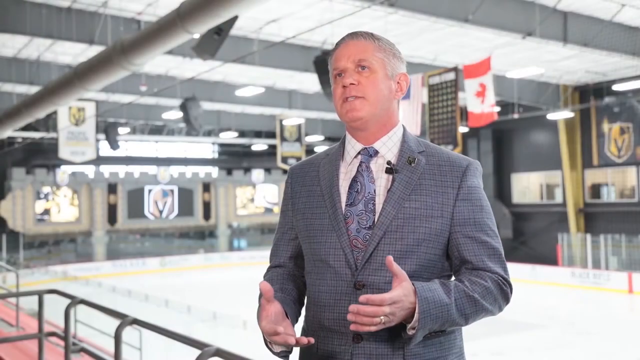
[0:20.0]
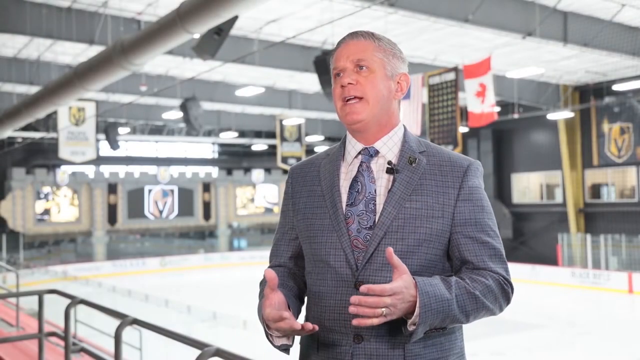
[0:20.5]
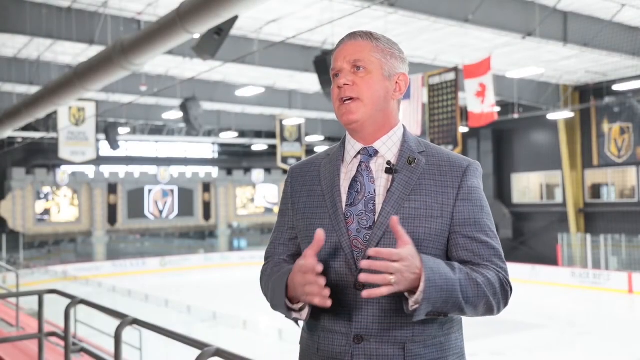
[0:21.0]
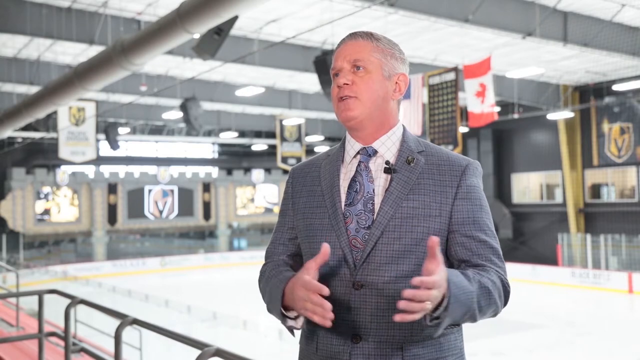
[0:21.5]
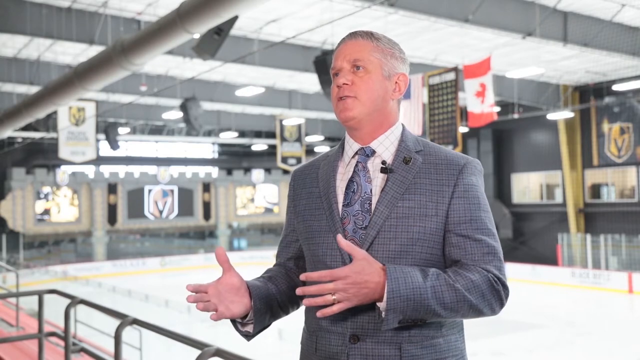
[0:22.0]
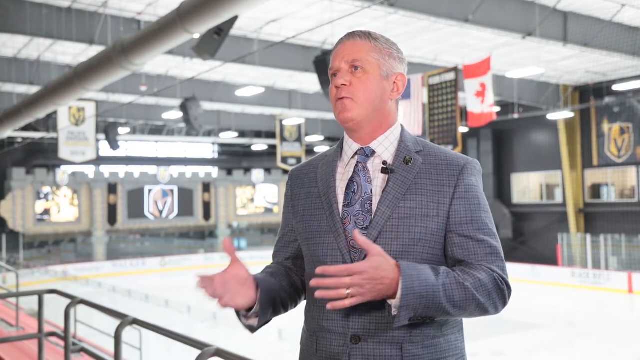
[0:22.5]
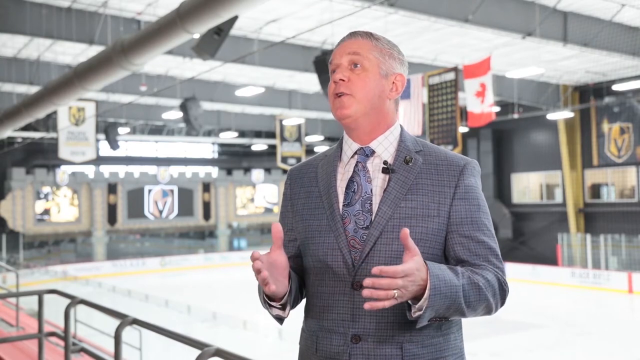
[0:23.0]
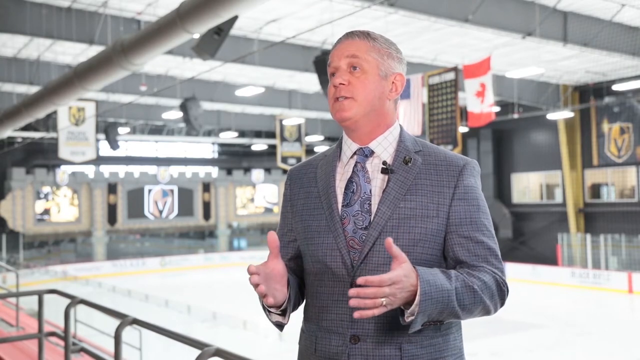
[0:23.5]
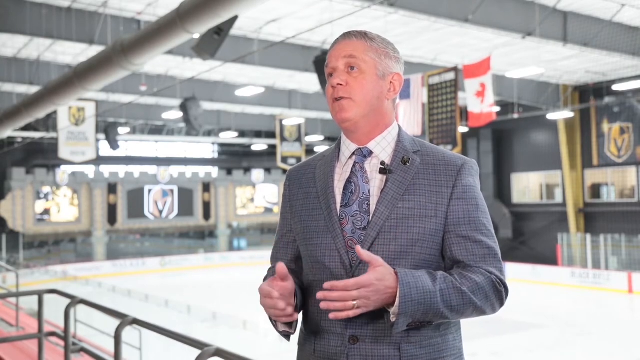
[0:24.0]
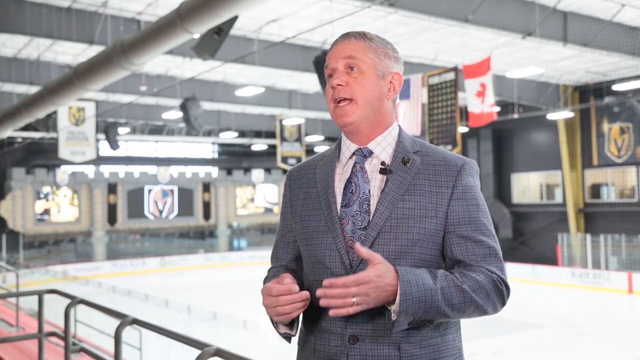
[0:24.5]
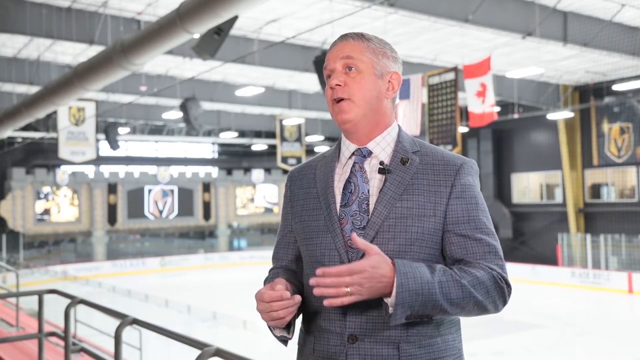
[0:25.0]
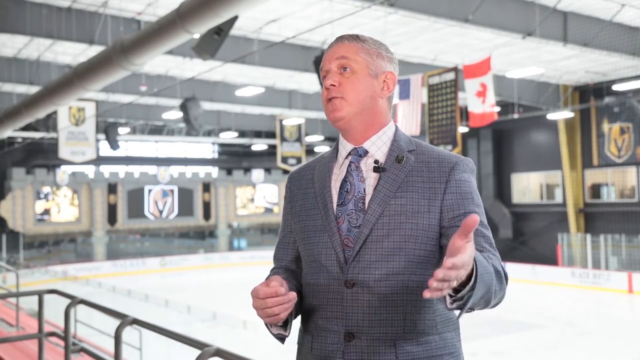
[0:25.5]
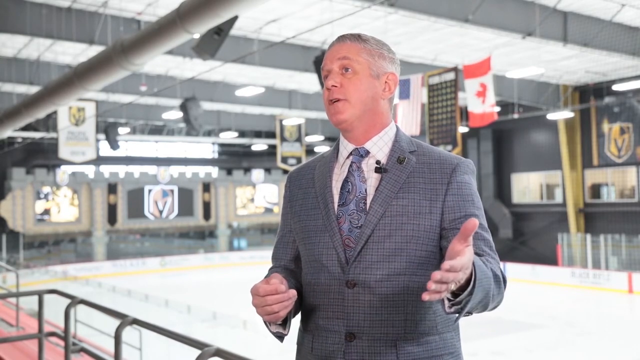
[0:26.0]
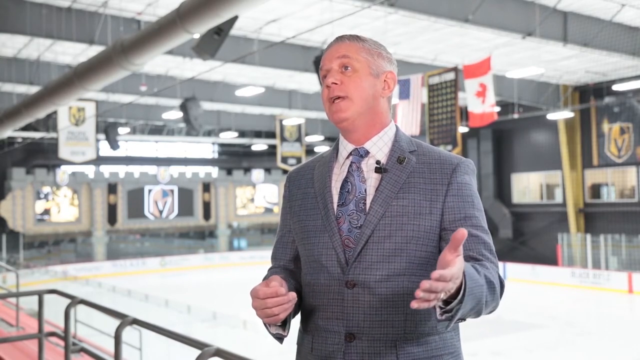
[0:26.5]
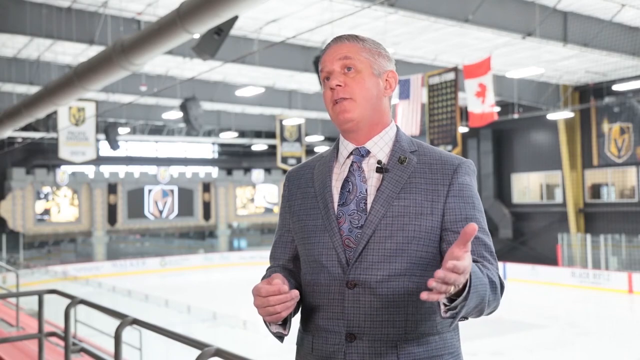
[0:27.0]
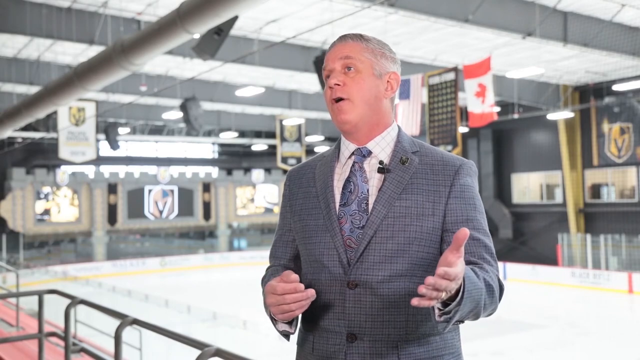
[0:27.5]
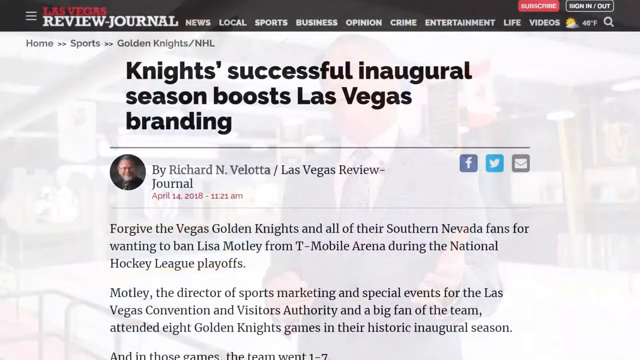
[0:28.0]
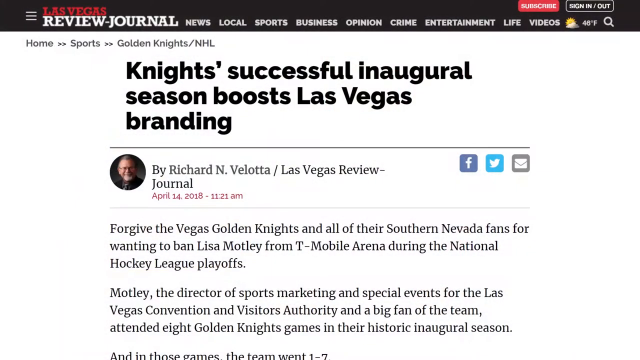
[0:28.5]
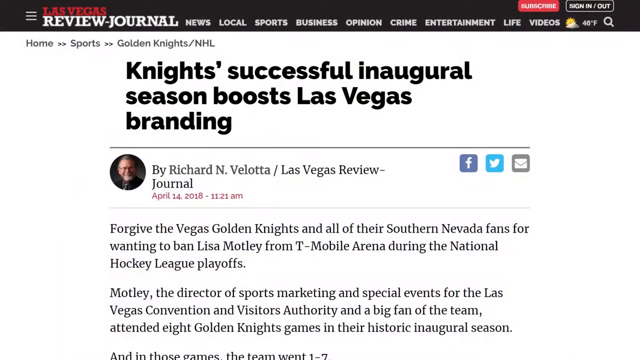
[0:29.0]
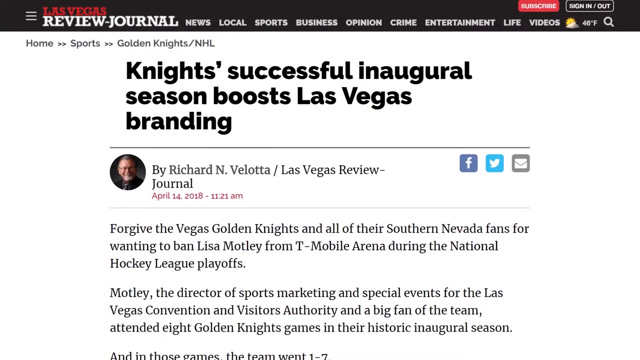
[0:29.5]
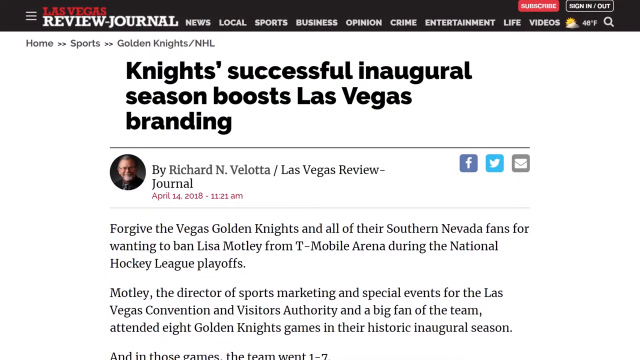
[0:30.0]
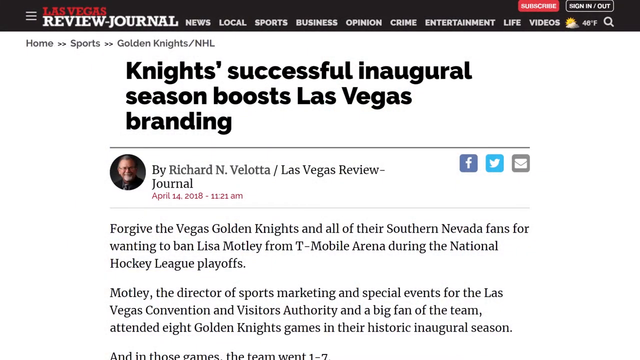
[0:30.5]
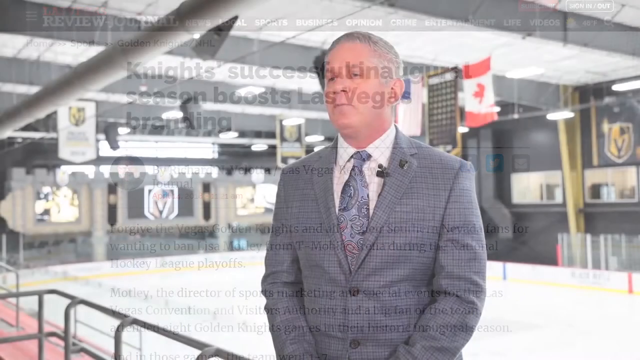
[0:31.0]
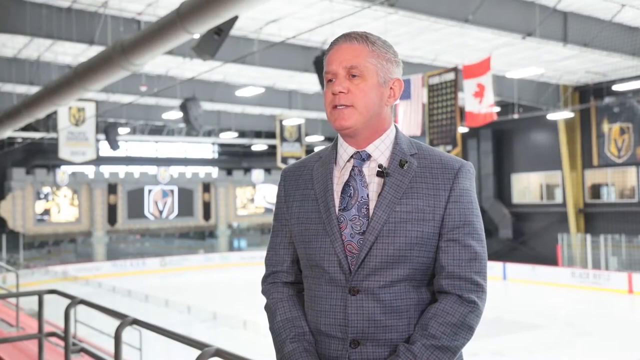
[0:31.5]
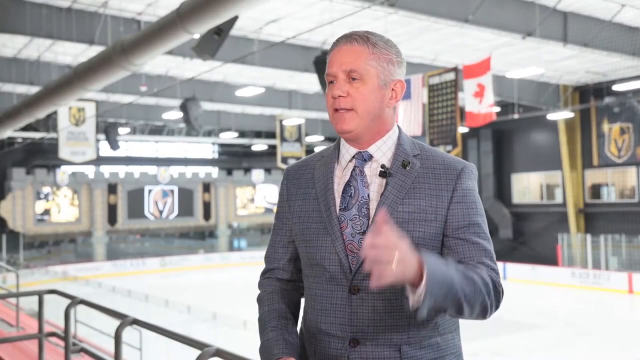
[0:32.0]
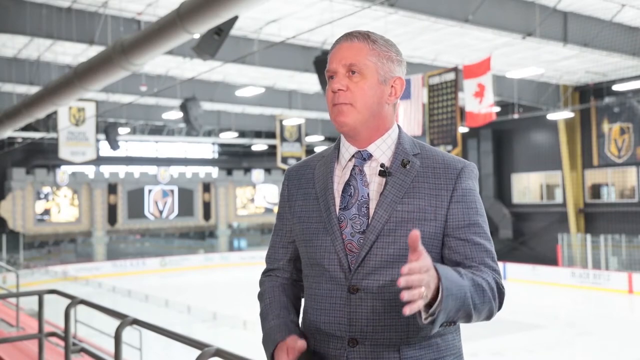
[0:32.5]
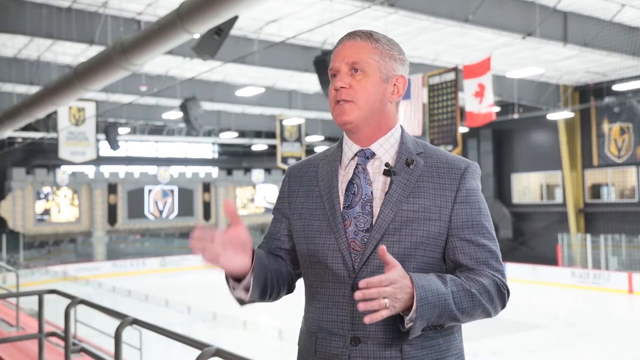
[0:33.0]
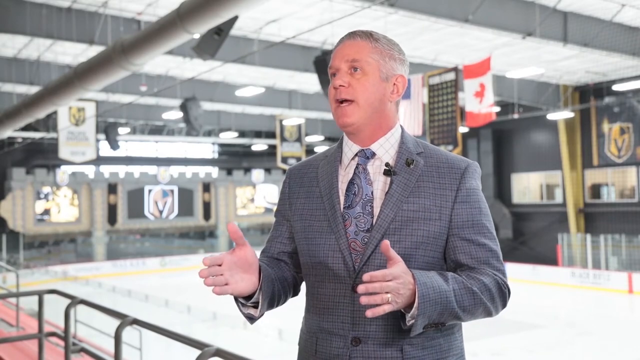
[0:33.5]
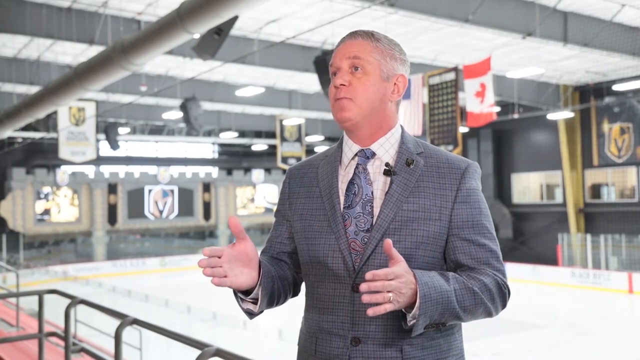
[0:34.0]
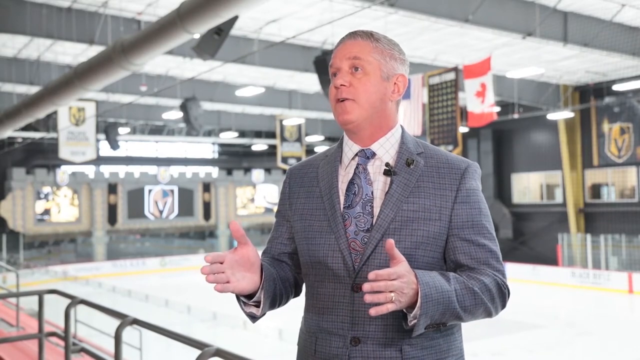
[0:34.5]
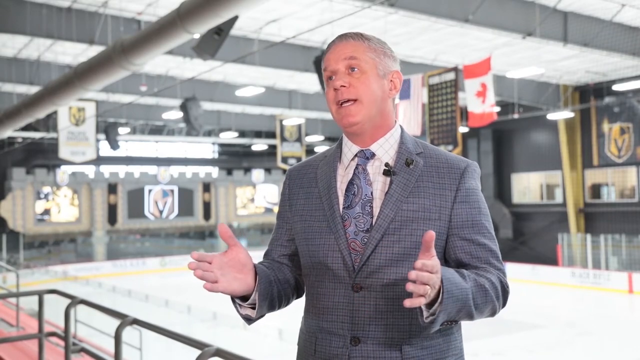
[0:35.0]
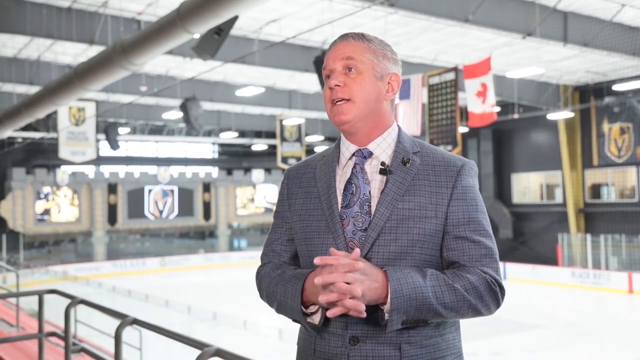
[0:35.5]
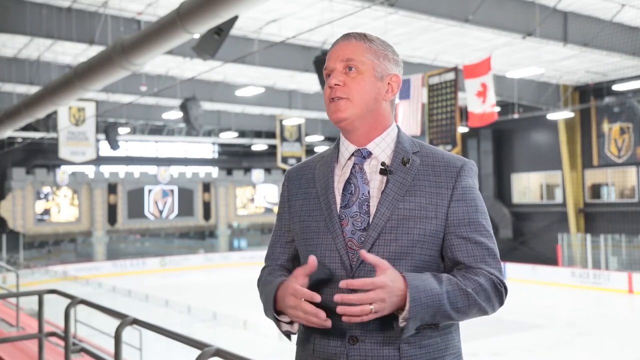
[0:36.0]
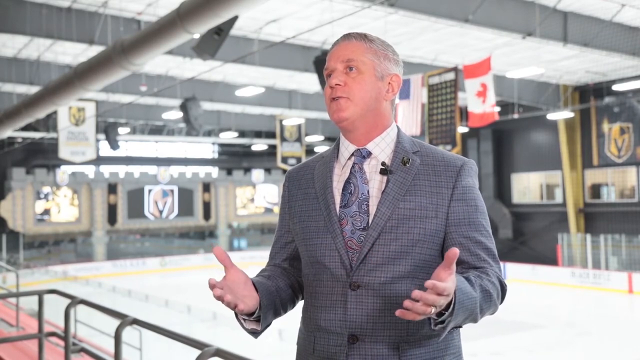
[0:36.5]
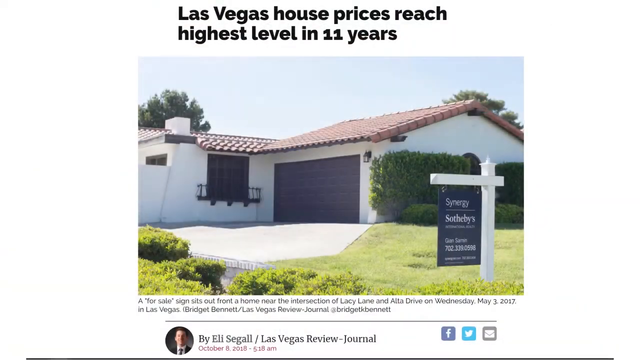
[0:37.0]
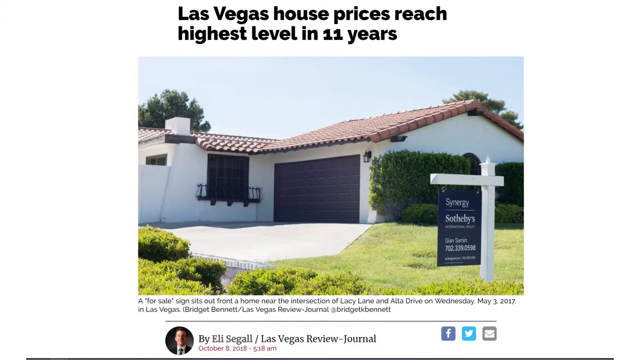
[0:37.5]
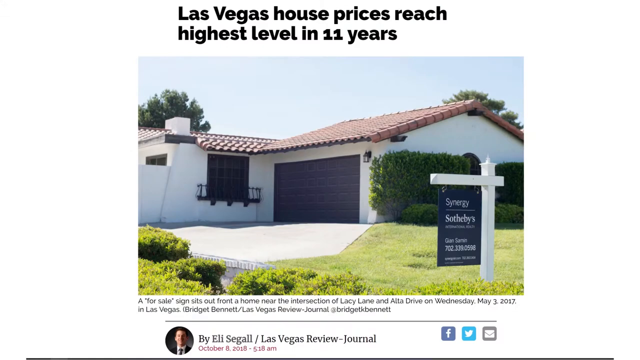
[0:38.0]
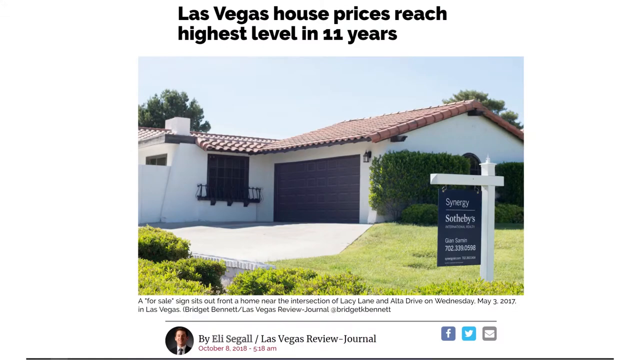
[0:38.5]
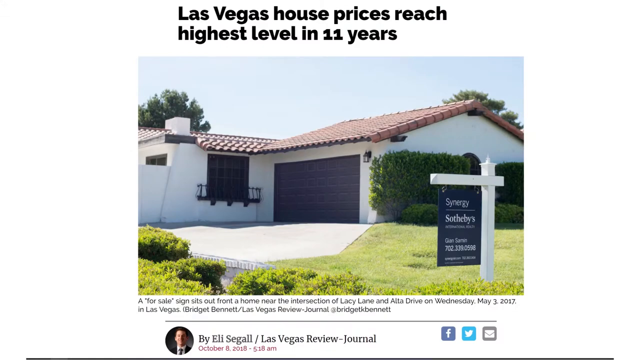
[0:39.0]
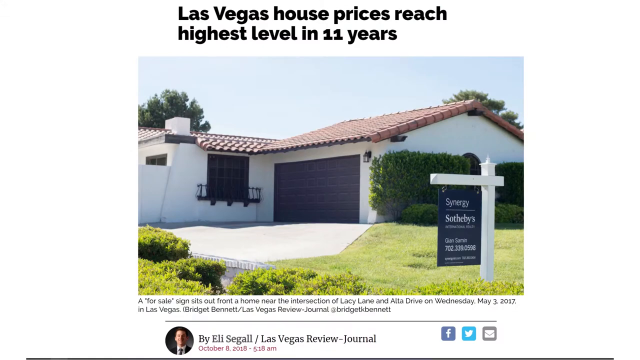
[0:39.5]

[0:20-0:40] A Caucasian man with short-cropped gray hair, clean-shaven, wears a gray suit, a gray tie and a white shirt. Behind him is an indoor sports area, apparently a hockey arena, with a white surface and a yellow line presumably marking an out-of-bounds area, and many logos on the walls, mostly kind of a Y shape. His arms are bent at the elbows and extended out from his body a little over waist height, hands open with palms facing each other, and he gestures a bit as he speaks while looking up and to the left off screen. There is no caption identifying him this time, but he is the same man as before. The video transitions to an online article from the Las Vegas Review Journal. A black banner across the top has menu items such as news, local sports, business opinion, crime, entertainment, life and video, along with a temperature of 46 degrees Fahrenheit and a search icon. Above the headline, the header reads home, sports, Golden Knights / NHL. The black headline on a white screen reads "Knight's successful inaugural season boosts Las Vegas branding." Beneath it is a byline, "by Richard and Valota / Las Vegas Review Journal", with a picture of an older man in a circle next to it, plus Facebook, Twitter and email icons. The date and time, April 14th, 2018 at 11:21 a.m., is in red. The article is on screen for only a couple of seconds before the video cuts back to Kerry Bubles speaking; he gestures with his left hand and his right hand and clasps his hands in front of him. The video then cuts to a picture set on a white background with a gradient at the bottom, arranged in a column in the middle: first a header, "Las Vegas house prices reach highest level in 11 years", then a white house with a red roof and a Sotheby's for sale sign out front, with the view focused on the garage door.